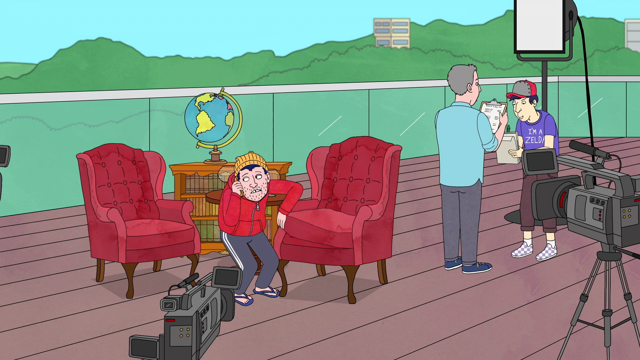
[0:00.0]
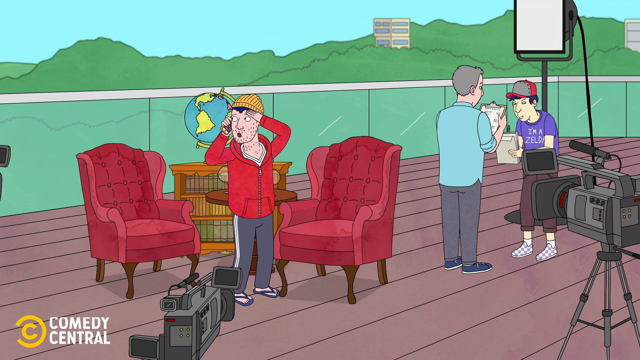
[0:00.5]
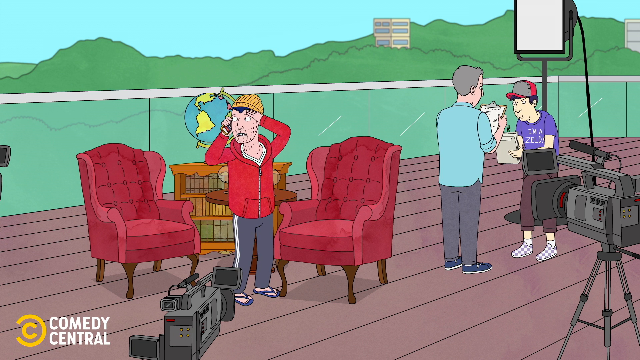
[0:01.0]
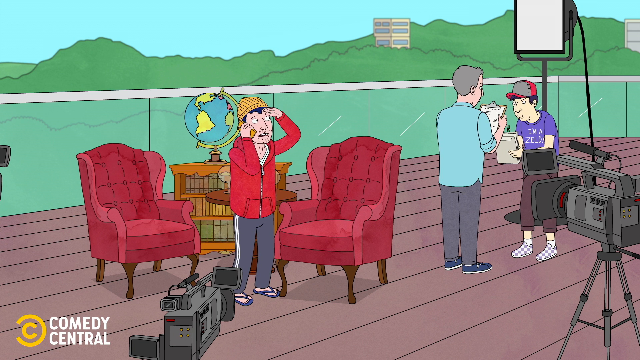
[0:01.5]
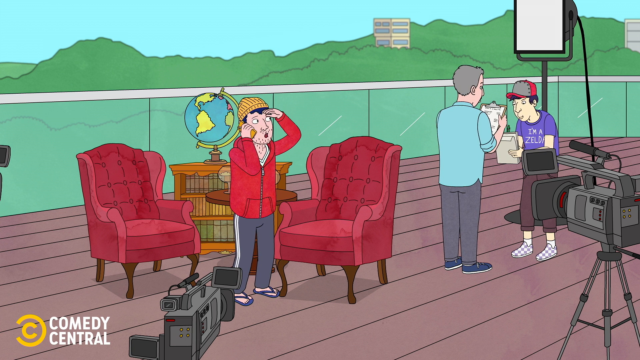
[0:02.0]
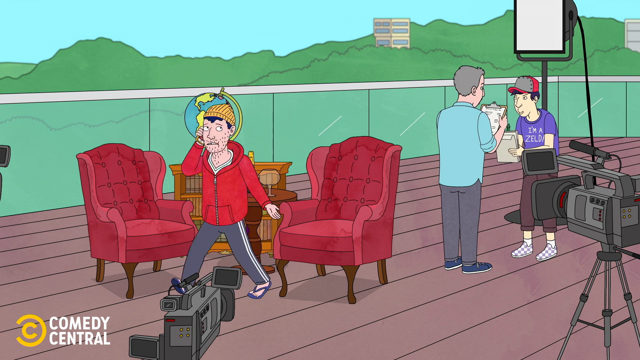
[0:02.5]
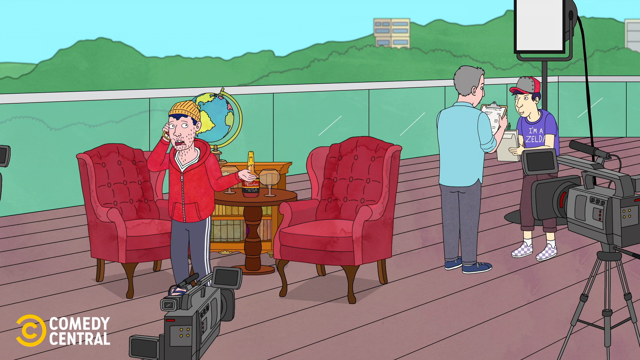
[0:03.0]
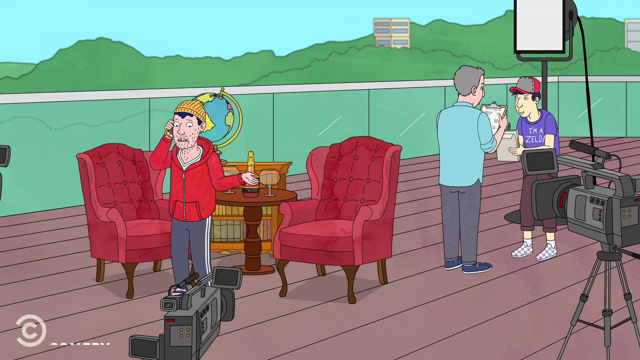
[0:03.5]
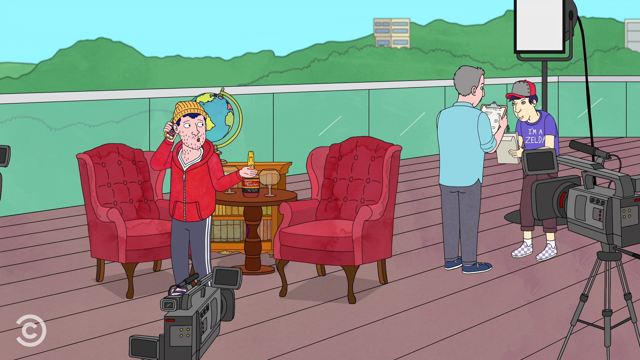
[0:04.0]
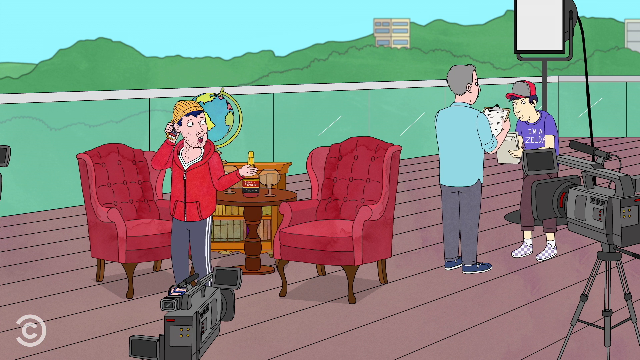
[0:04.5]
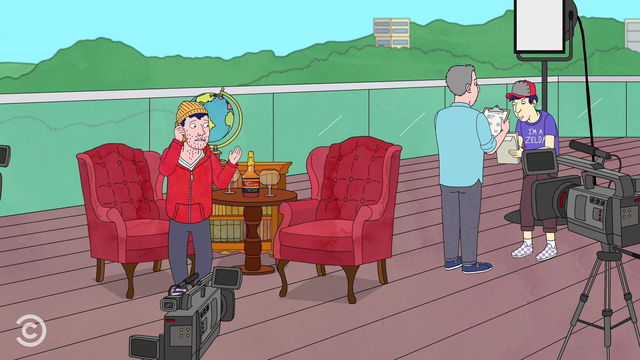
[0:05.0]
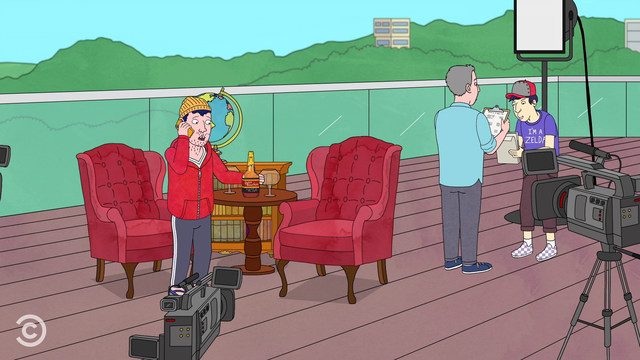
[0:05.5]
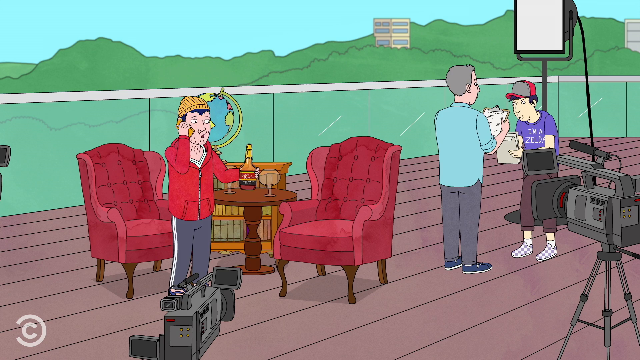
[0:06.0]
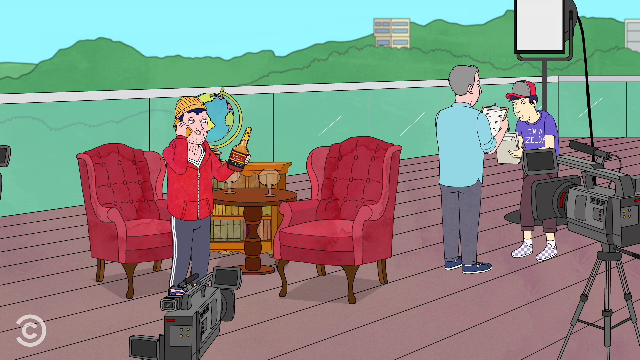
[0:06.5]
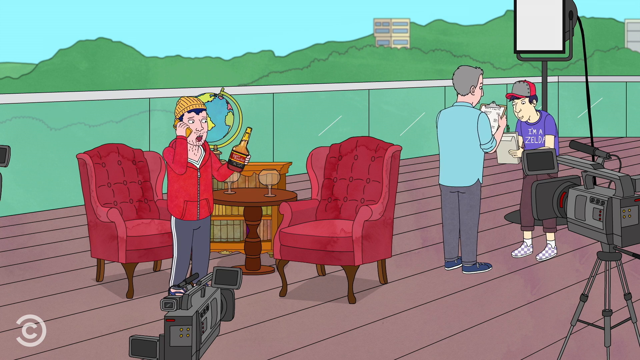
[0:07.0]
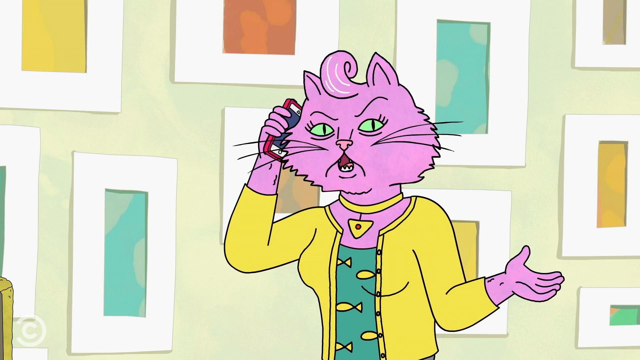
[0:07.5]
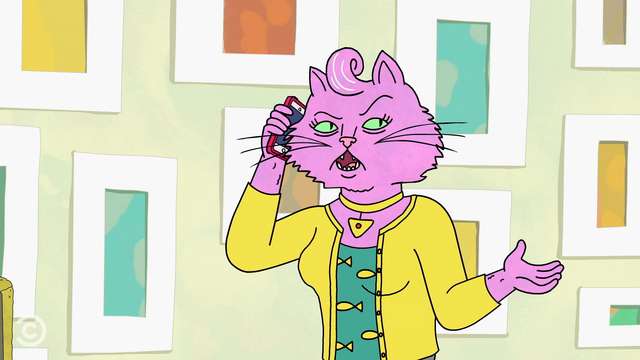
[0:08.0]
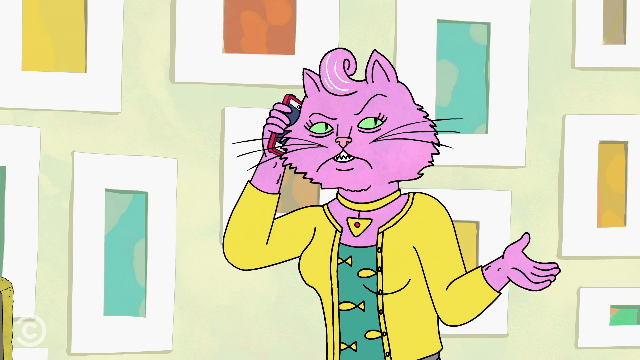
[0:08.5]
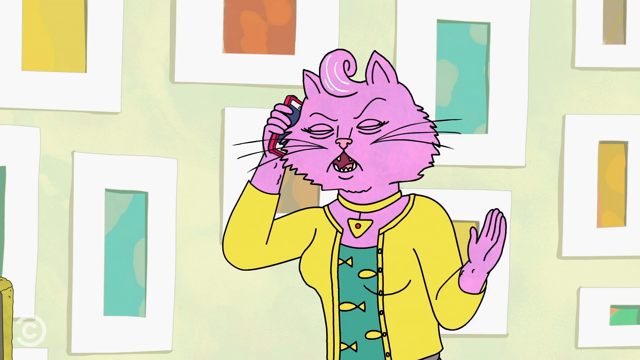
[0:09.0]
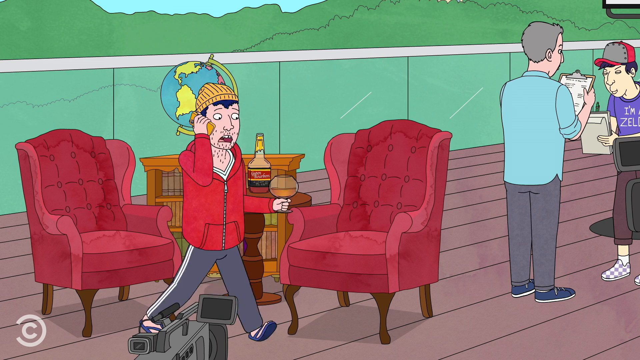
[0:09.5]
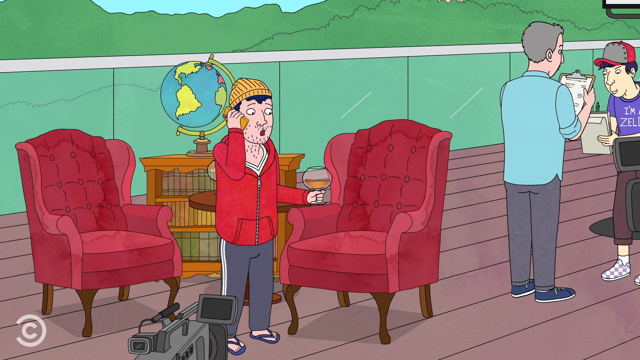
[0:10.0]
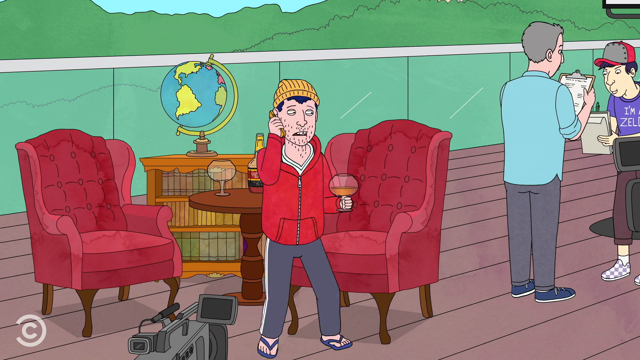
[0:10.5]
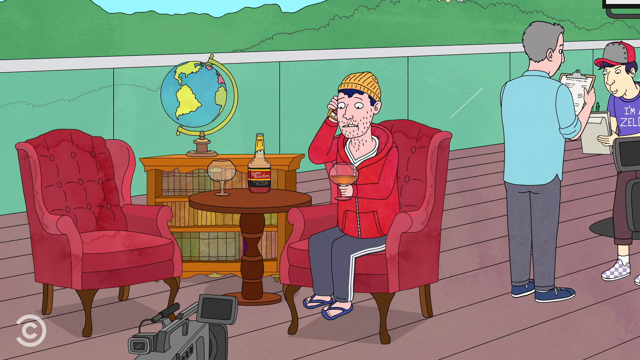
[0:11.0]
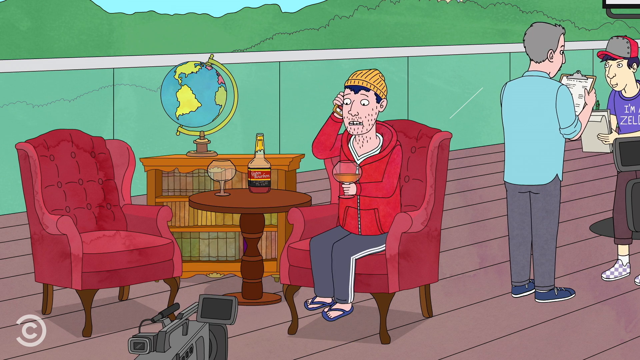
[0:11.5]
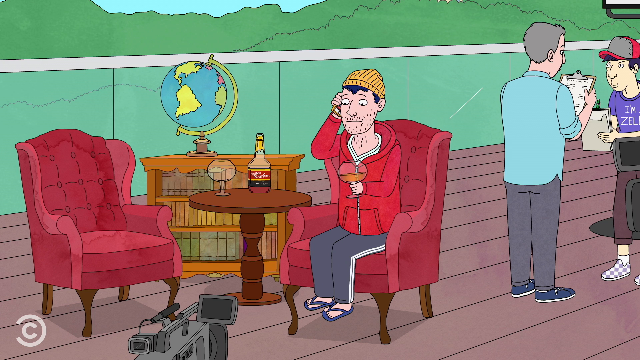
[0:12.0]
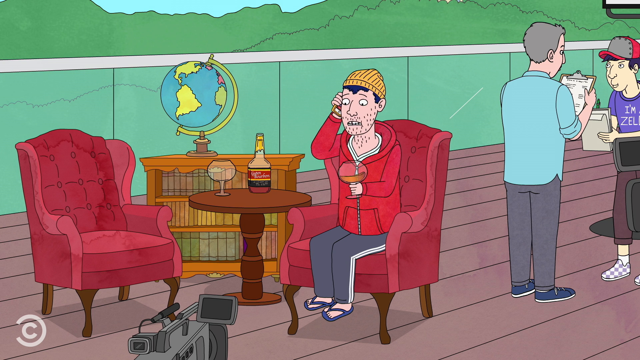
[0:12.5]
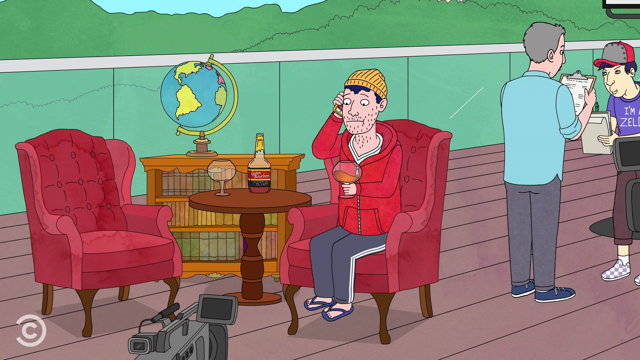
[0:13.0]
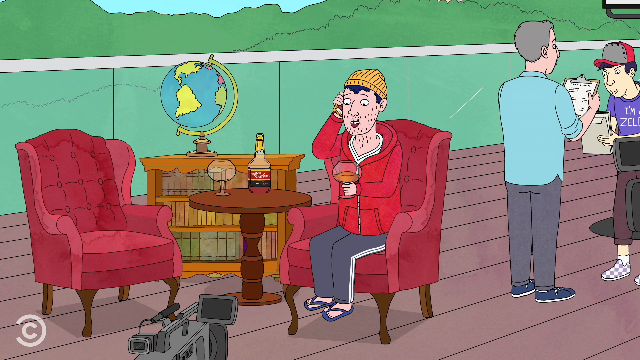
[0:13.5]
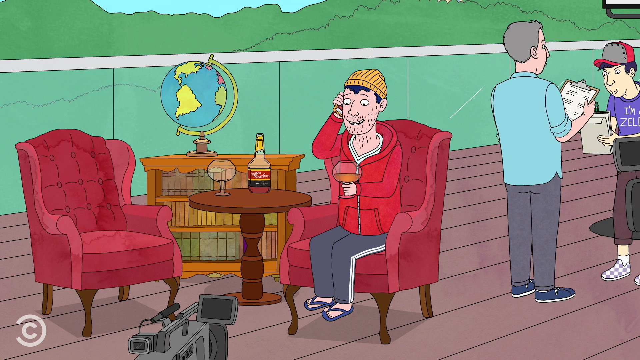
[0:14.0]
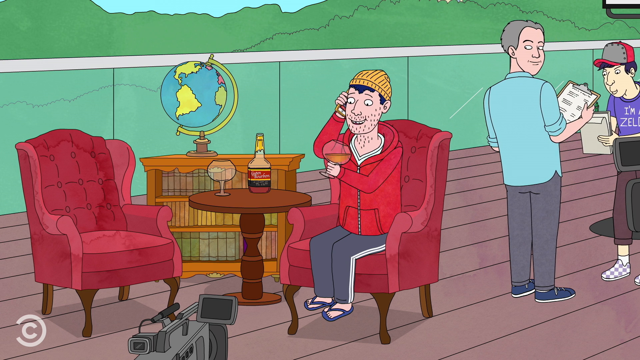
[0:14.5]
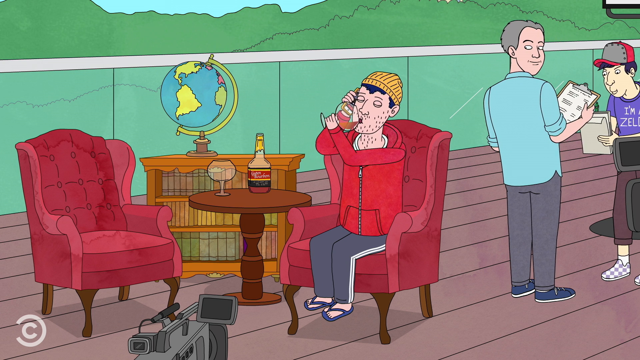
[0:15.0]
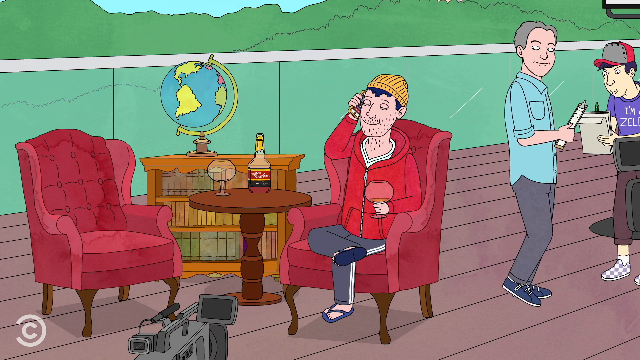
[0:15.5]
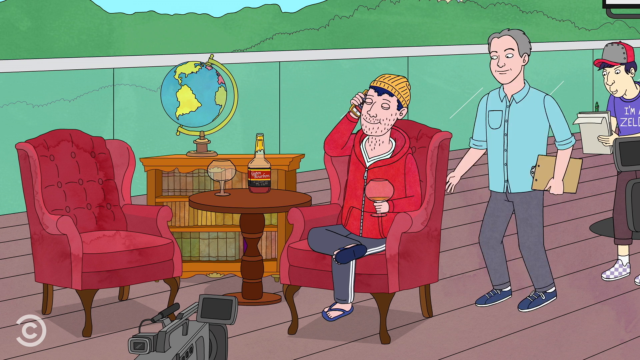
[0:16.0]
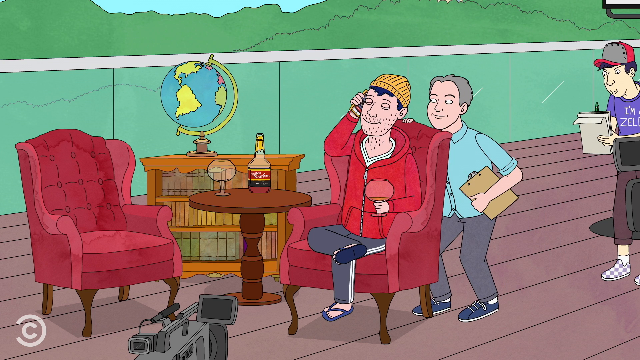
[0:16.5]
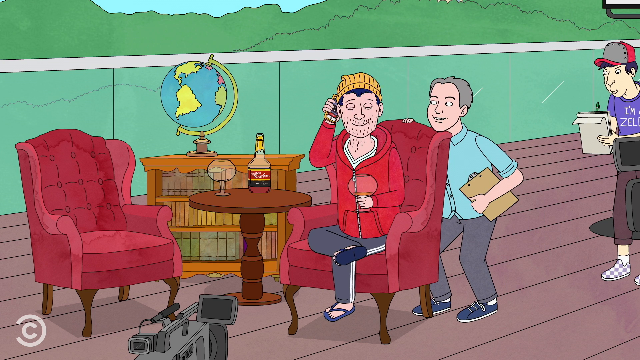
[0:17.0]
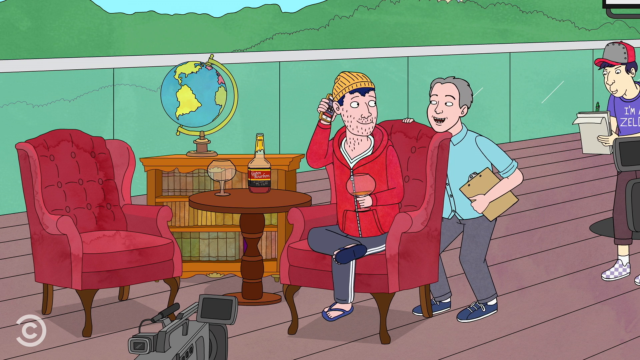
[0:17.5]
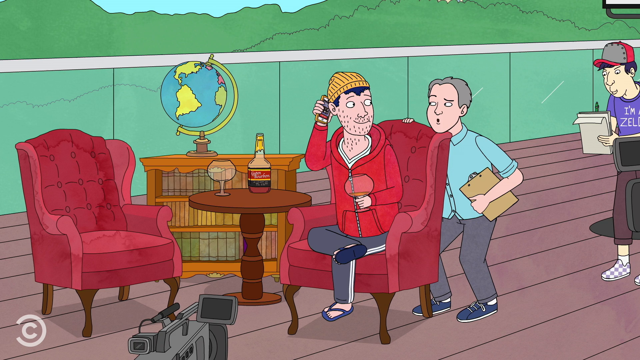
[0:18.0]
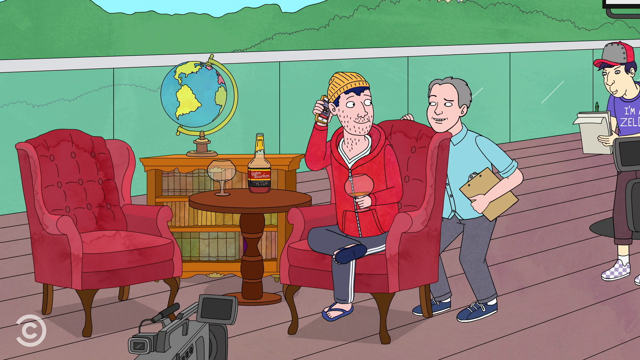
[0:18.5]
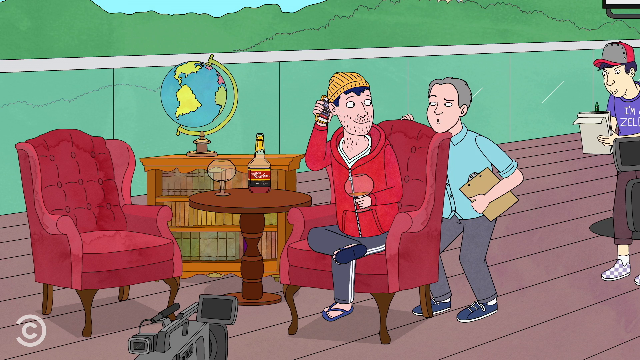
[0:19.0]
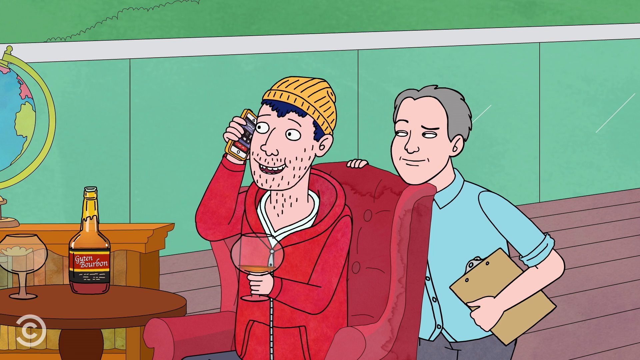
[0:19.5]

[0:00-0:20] Two red chairs are on the left of the screen, and a man in a yellow hat, a red jacket and grey pants stands between them. On the floor in front of him is a camera, and around them appears to be a glass balcony wall. Behind the standing man is a bookshelf with a globe on top. To his right, and to the right of one of the red chairs, a man with his back to the camera talks to someone wearing a purple shirt, a baseball cap and brown pants; one of them wears chequered shoes. The man standing in front holds a clipboard. At the very far right of the screen a camera points toward them, and behind the man in the purple shirt a big light points toward the chairs. In the background are trees, a building sticking out in the middle of the screen, and half a building at the very far right. The man in the red top talks on the phone with his left arm raised, looking around him. He walks to the front of the left red chair and picks up a bottle. The video cuts to a pink cat wearing a gold necklace with a triangle pendant holding a red stone in the middle, a yellow cardigan, and underneath it what looks like a green top with yellow fish. Behind the cat are various picture frames, each with different colours inside. The cat is talking. The video cuts back to the man on the phone, who sits down on the right red chair holding a brandy glass; he wears flip flops. He looks happy, takes a drink from the glass and sits back looking relaxed. The man with the clipboard, in a green shirt, turns around and walks to the back of the chair to get the man's attention. He hunkers down a little, the man in the red top turns to look at him, the man in green starts talking to him, and the camera pans to a close-up.